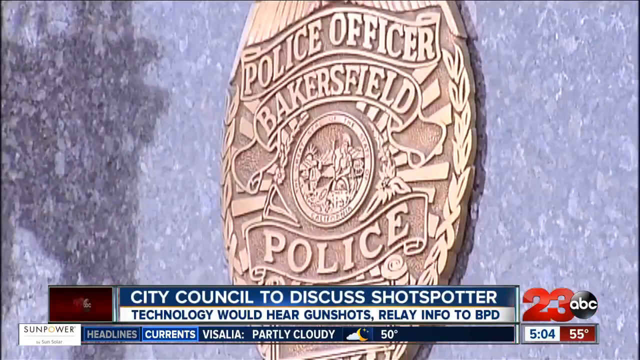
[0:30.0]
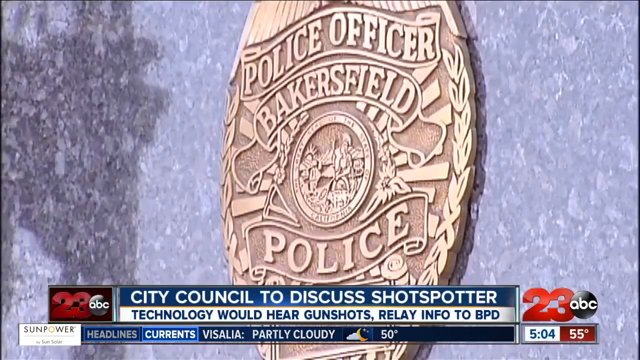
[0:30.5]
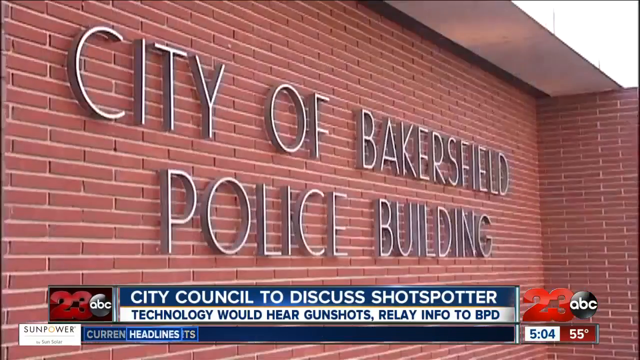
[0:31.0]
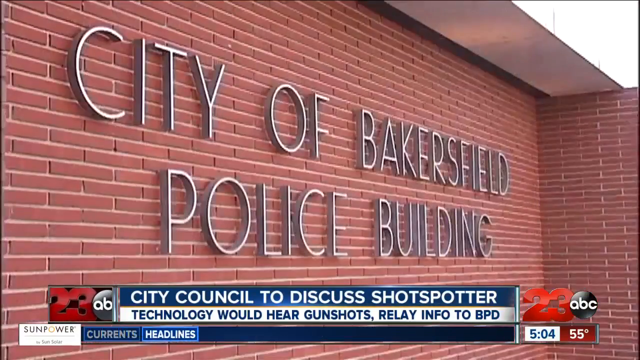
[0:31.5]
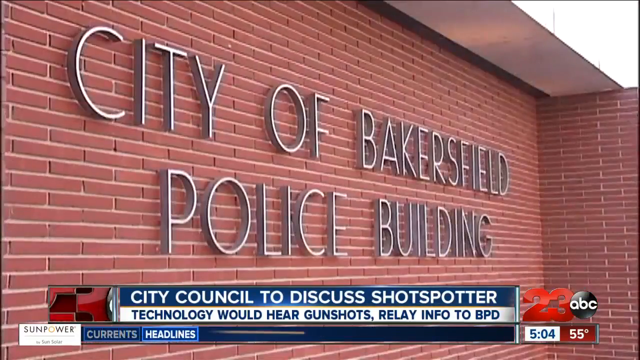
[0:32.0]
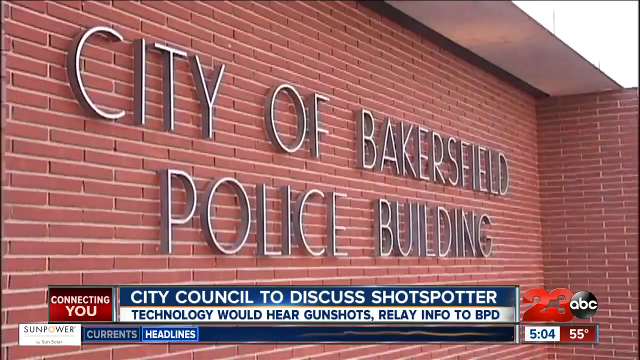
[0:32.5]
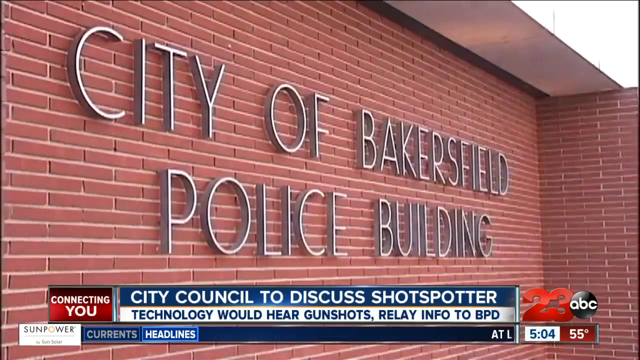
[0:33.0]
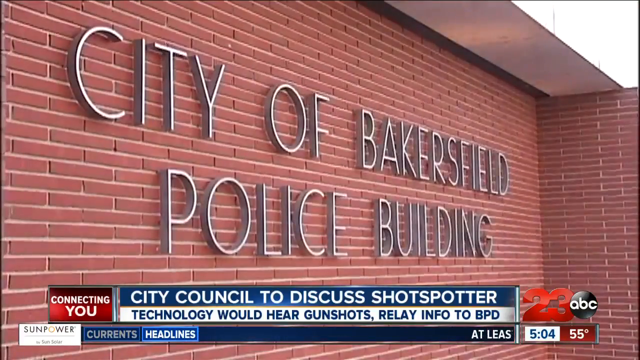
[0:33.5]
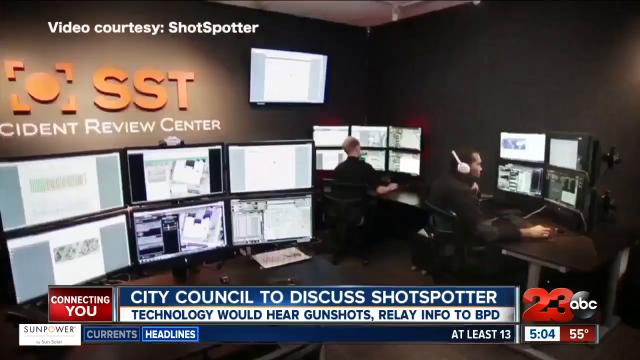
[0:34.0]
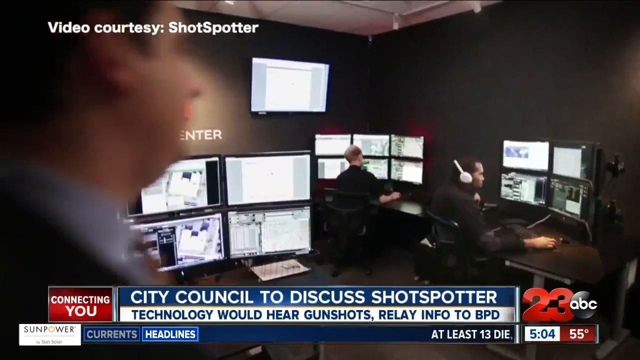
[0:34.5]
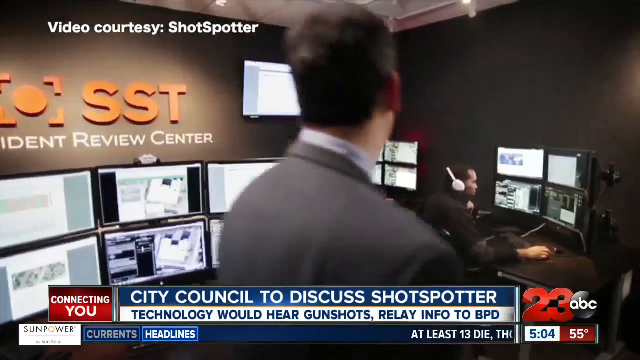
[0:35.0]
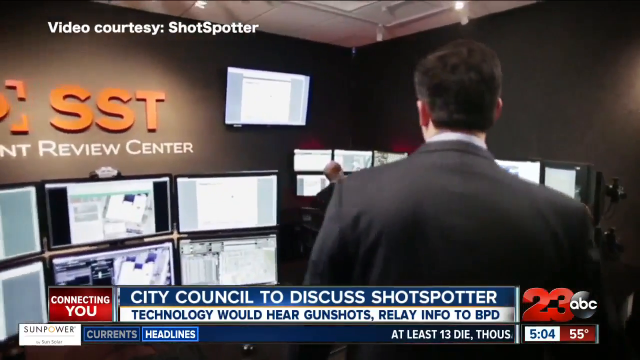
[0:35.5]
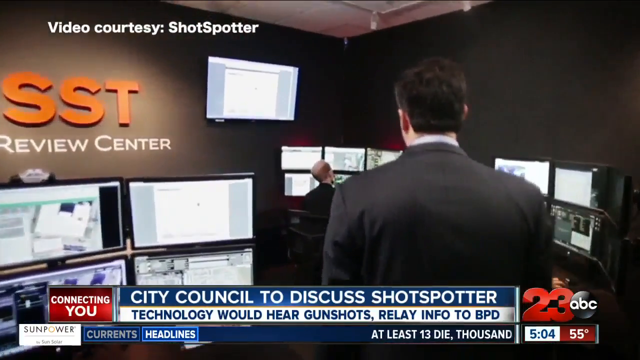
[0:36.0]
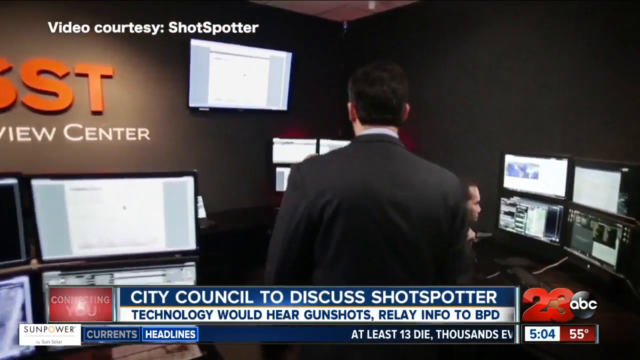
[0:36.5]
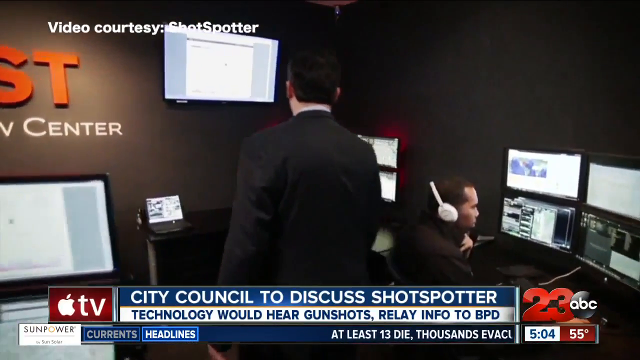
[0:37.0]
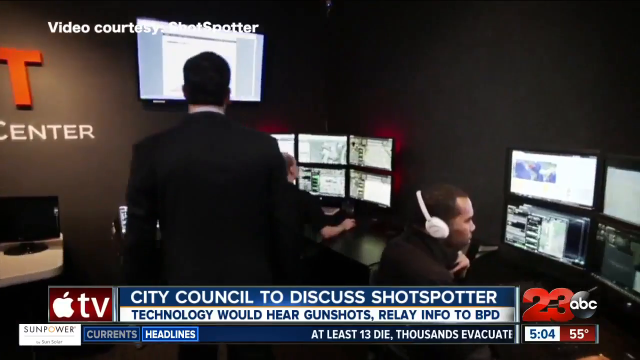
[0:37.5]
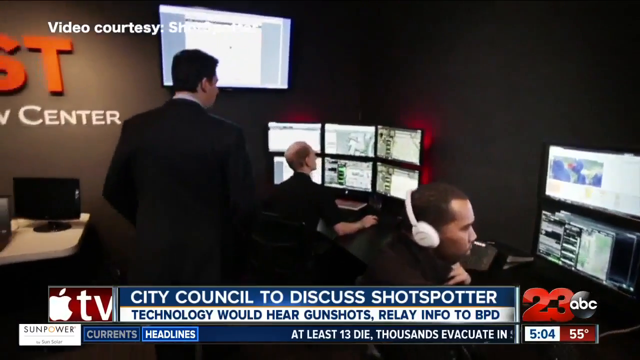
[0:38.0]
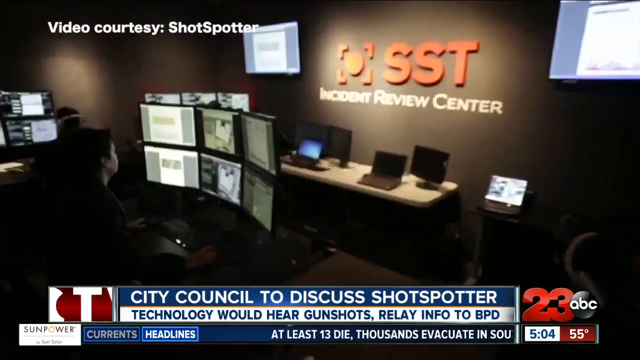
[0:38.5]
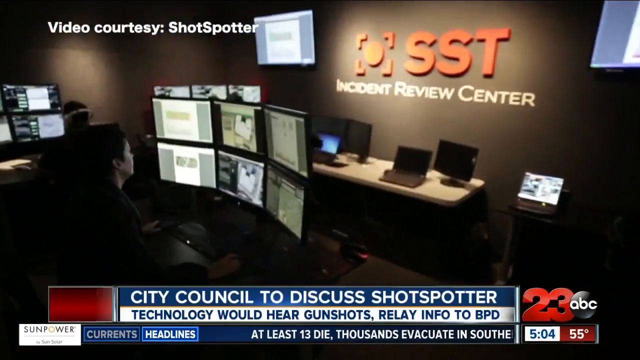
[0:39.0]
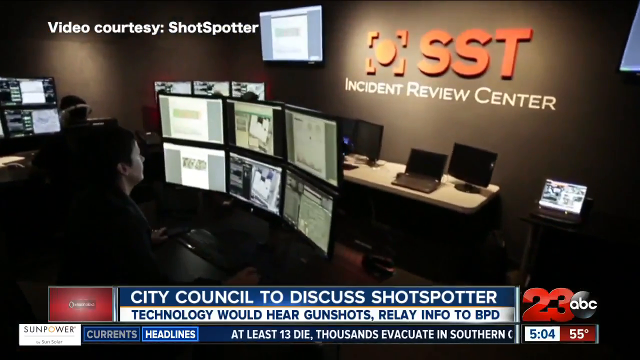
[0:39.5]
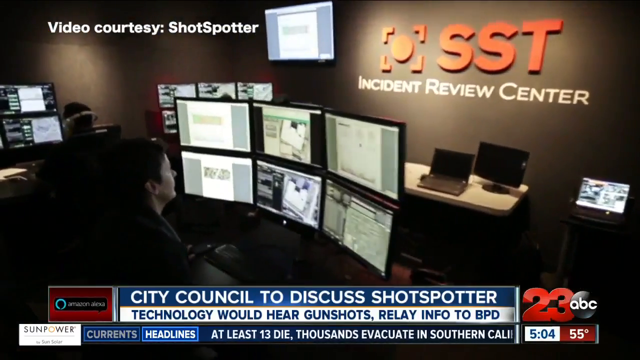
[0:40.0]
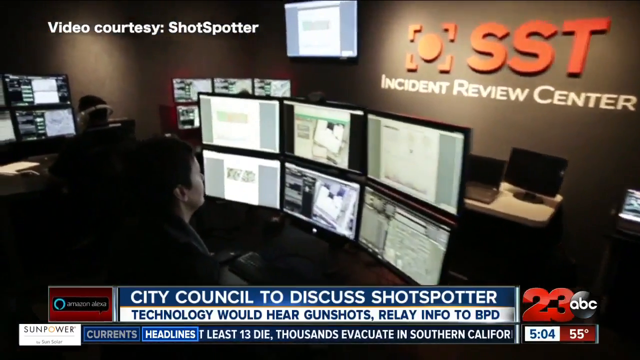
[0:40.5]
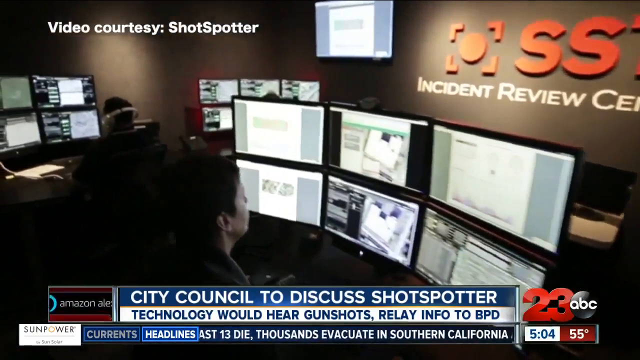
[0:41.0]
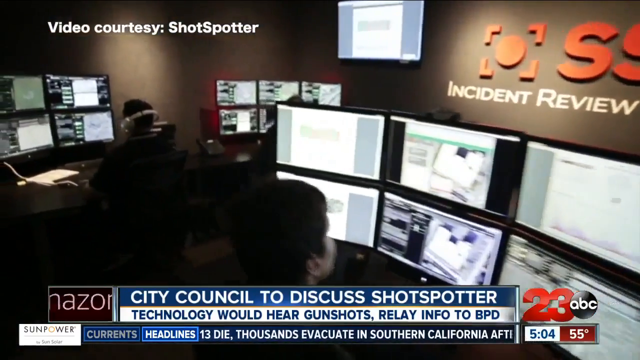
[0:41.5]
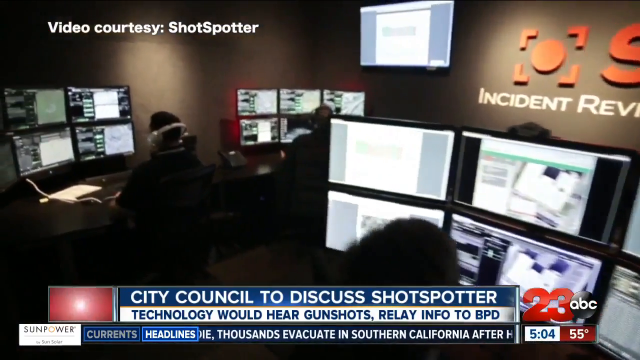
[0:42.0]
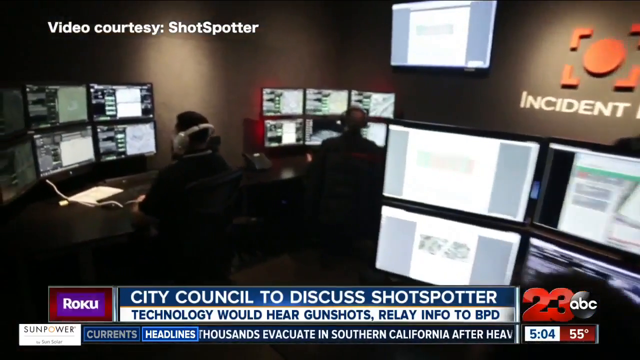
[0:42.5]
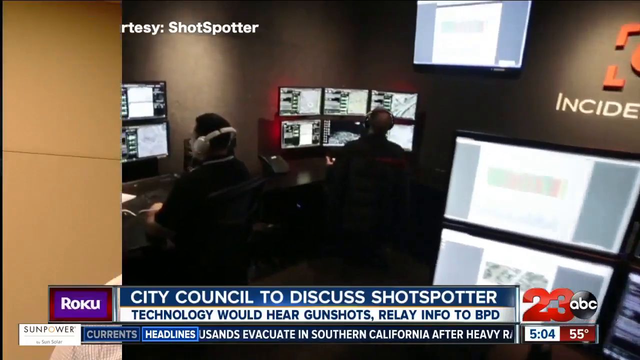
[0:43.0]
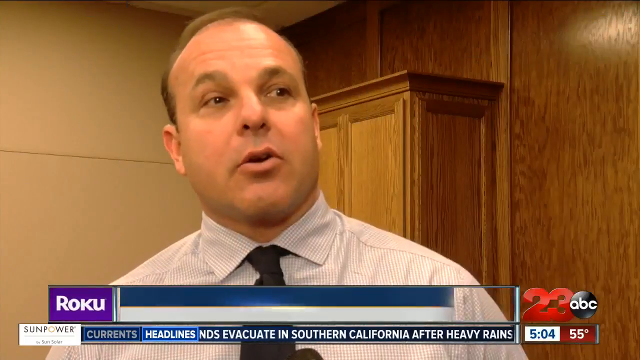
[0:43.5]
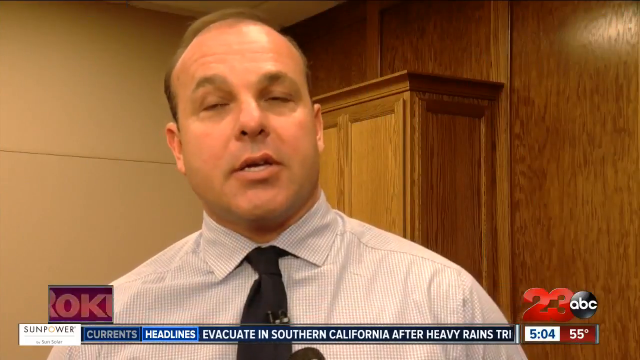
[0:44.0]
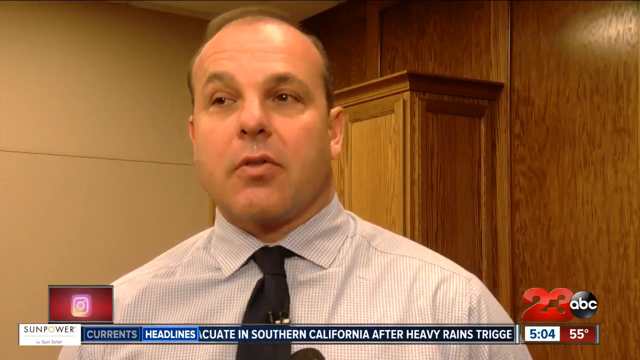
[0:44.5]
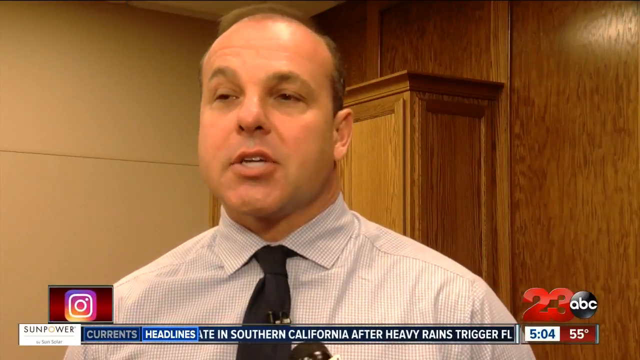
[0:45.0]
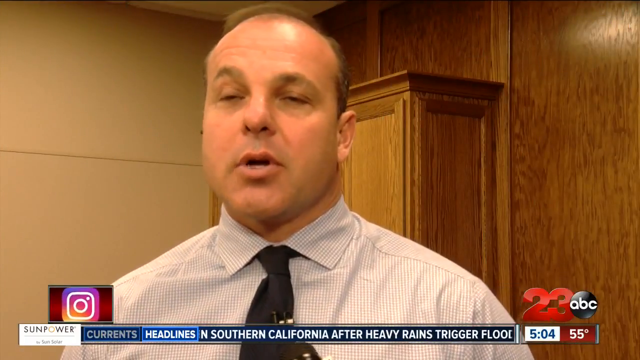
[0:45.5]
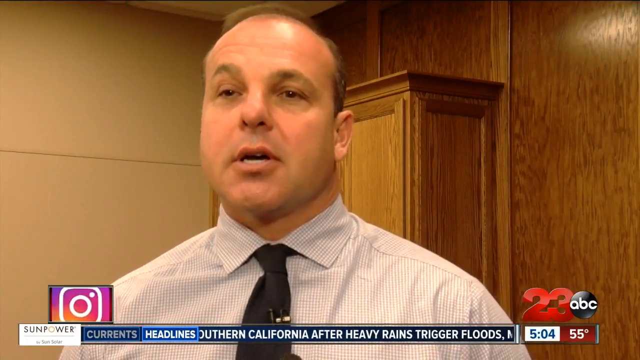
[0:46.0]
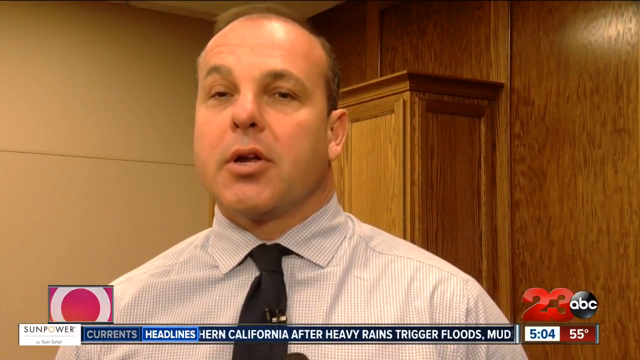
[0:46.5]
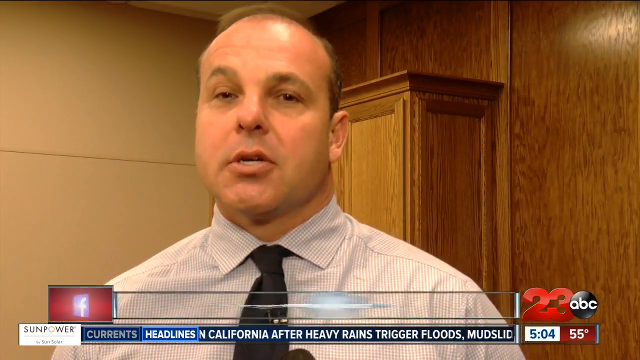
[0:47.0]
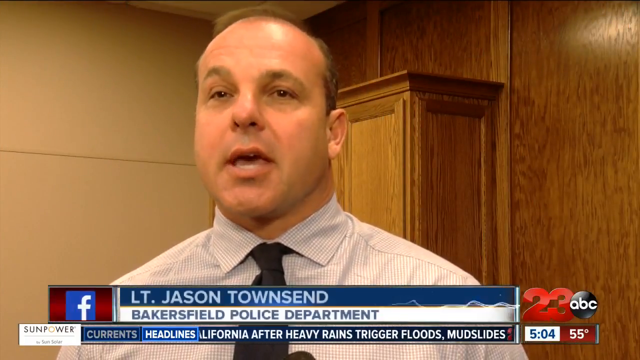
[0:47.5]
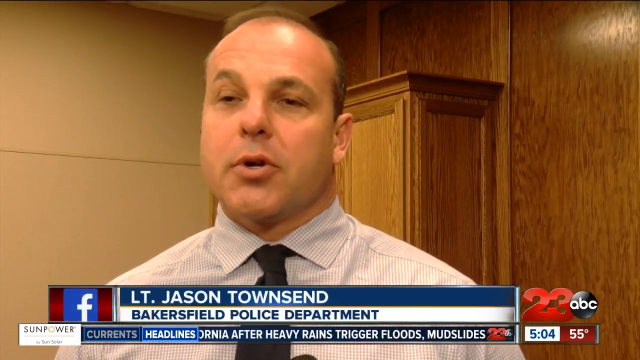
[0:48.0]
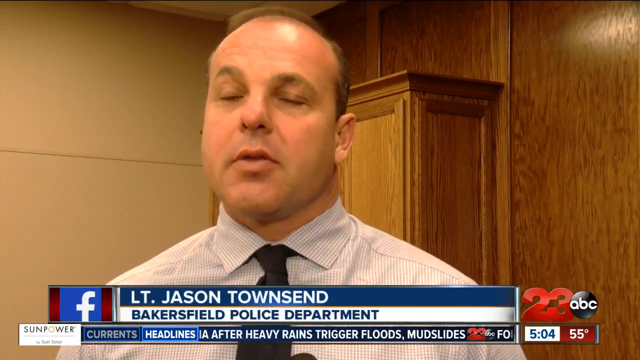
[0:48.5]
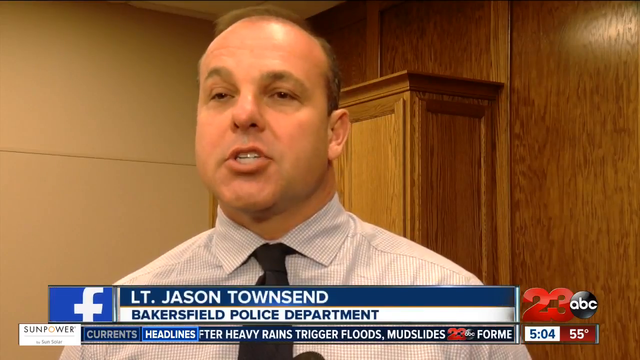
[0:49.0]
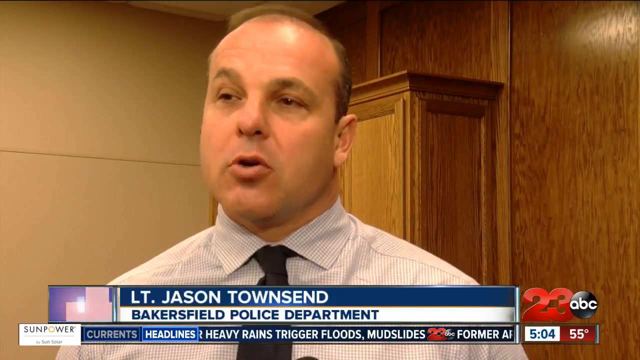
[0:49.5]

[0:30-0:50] Lieutenant Jason Townsend continues to talk. He has short brown hair and wears a white vest with a black tie. He appears to be in some sort of meeting, with a lot of other people present in what is sort of a meeting-table setting, at least maybe 20 people. The view then kind of zooms in on the small gunshot notifications again. One of them says "no nearby address," while others show more specific addresses; for the most part, they seem very specific about which address each gunshot is near.